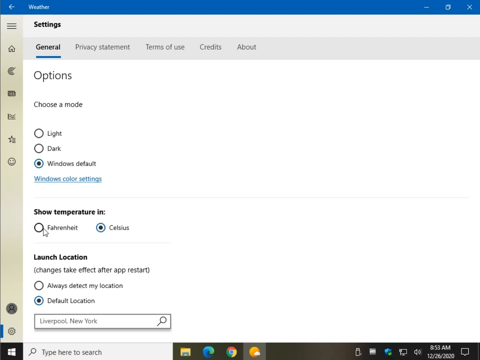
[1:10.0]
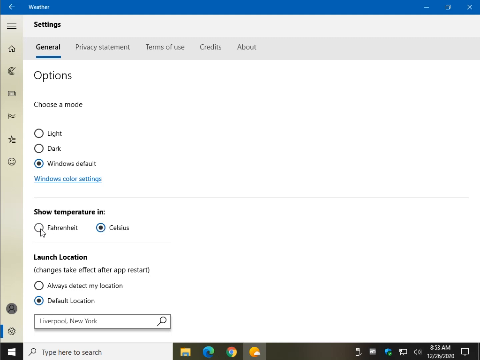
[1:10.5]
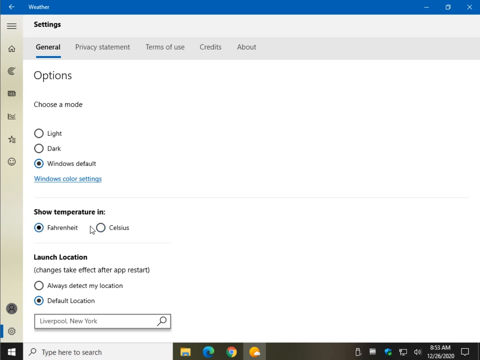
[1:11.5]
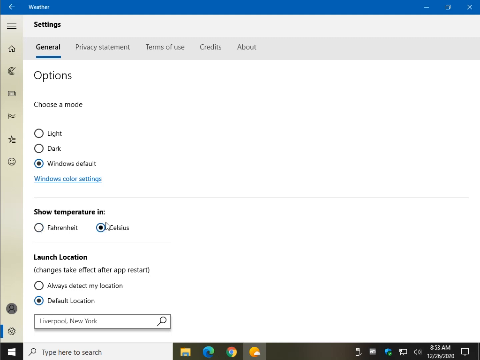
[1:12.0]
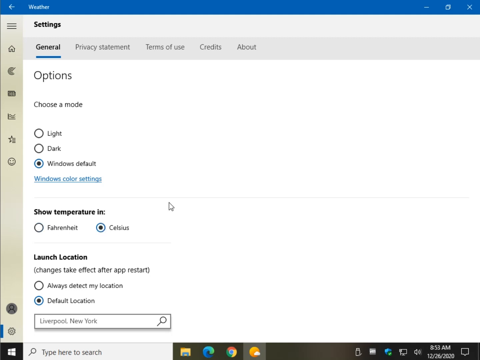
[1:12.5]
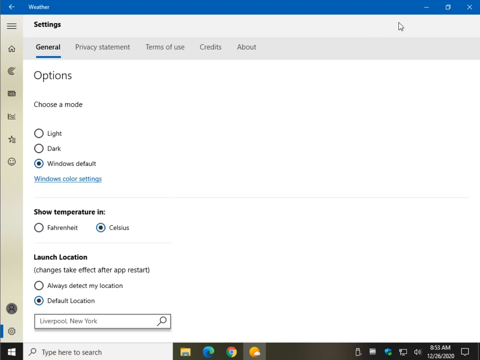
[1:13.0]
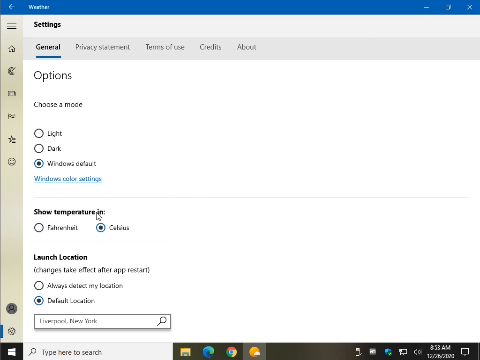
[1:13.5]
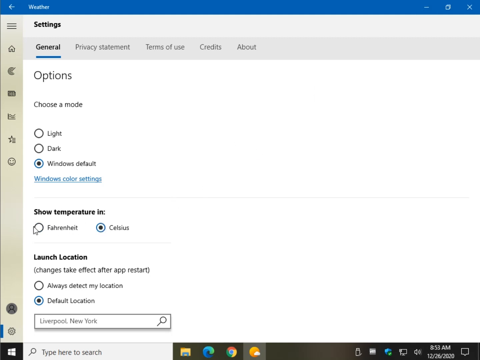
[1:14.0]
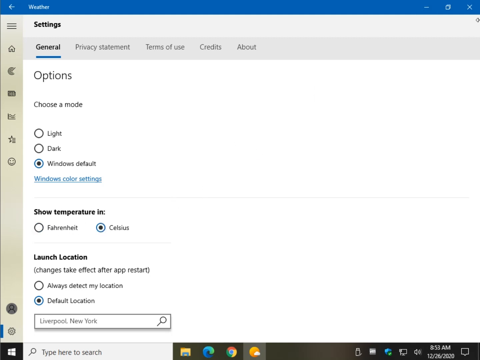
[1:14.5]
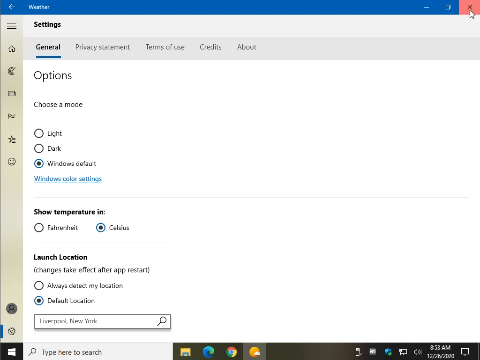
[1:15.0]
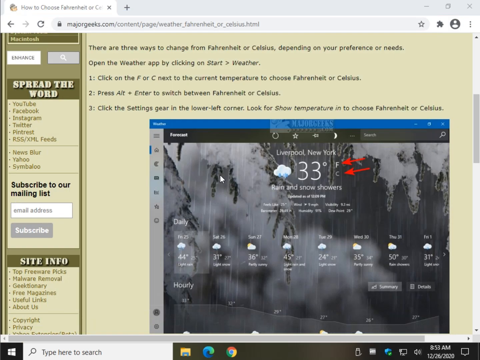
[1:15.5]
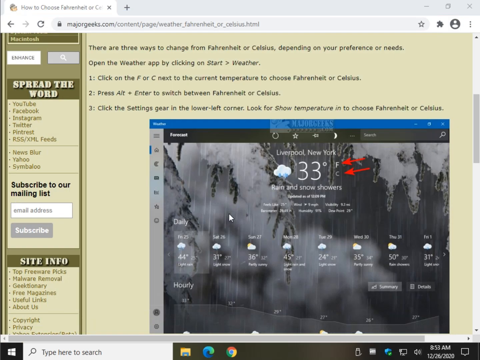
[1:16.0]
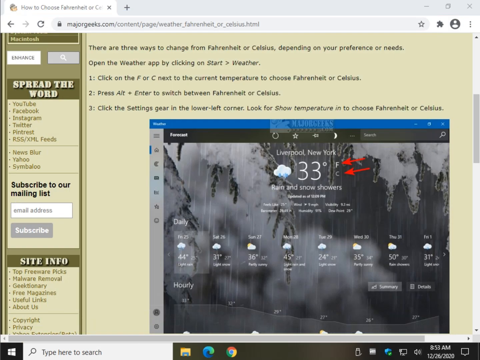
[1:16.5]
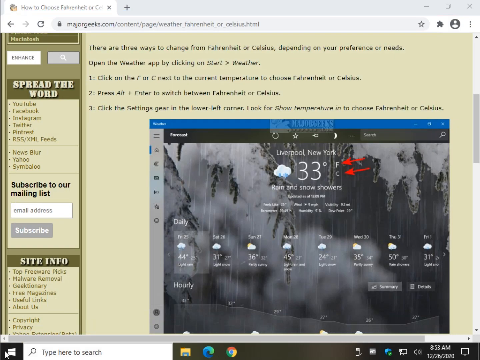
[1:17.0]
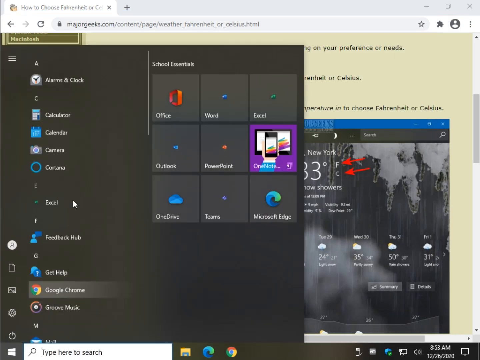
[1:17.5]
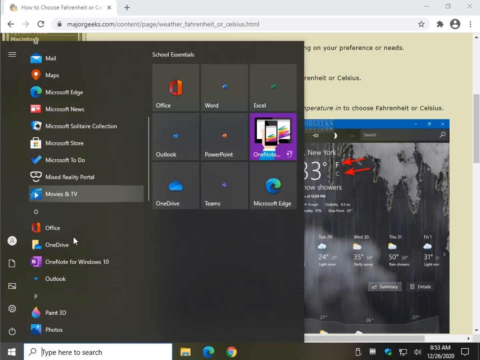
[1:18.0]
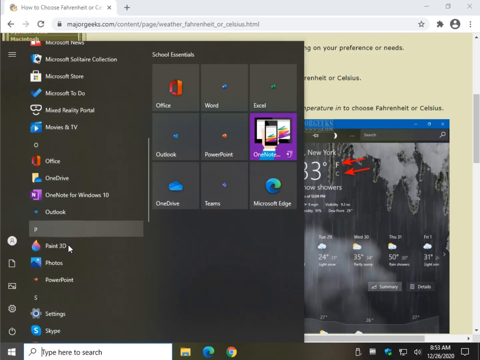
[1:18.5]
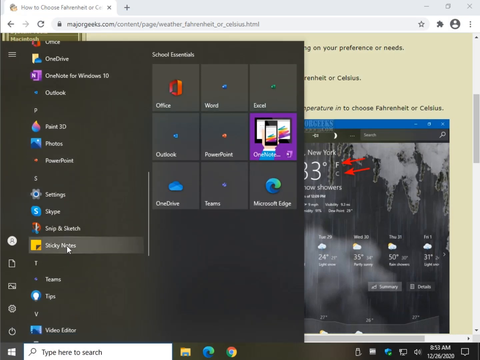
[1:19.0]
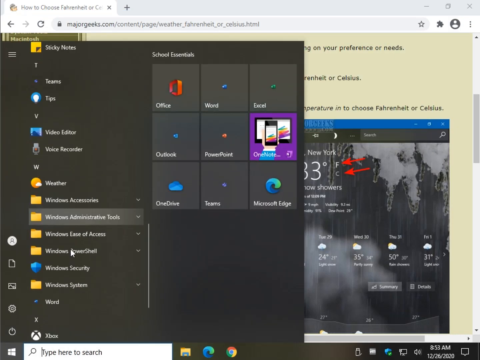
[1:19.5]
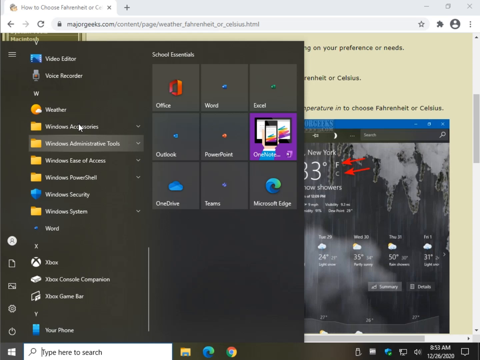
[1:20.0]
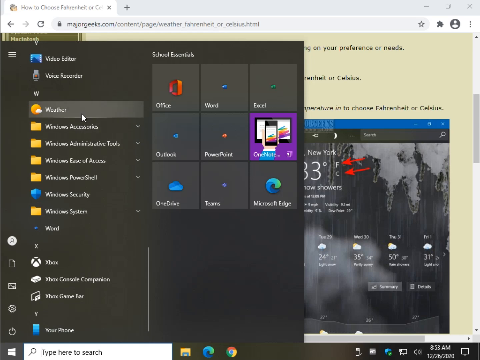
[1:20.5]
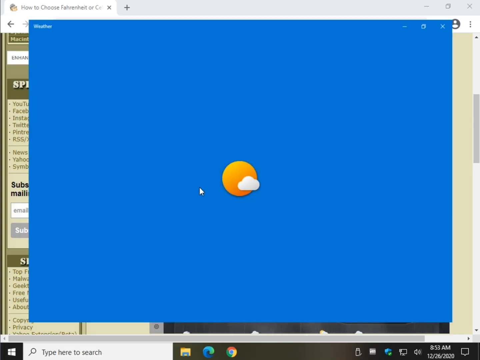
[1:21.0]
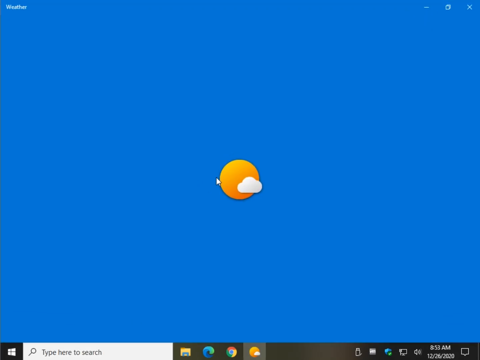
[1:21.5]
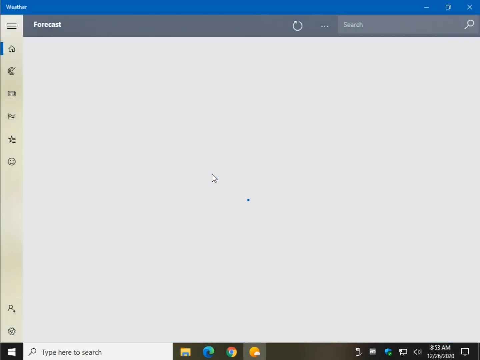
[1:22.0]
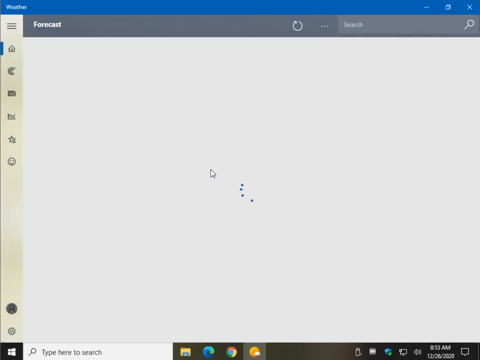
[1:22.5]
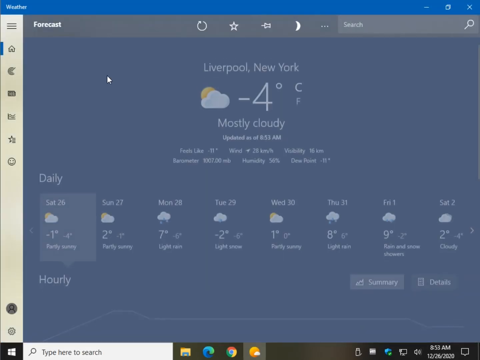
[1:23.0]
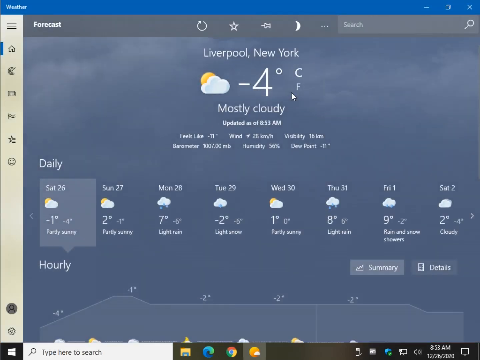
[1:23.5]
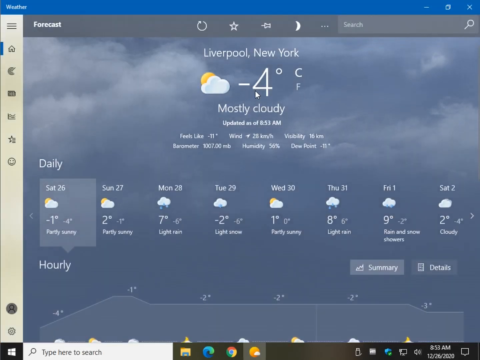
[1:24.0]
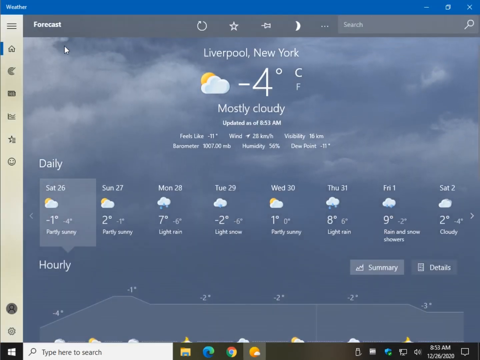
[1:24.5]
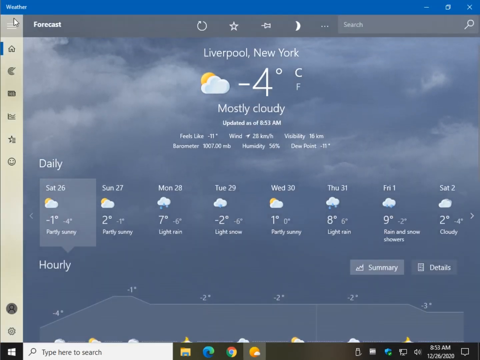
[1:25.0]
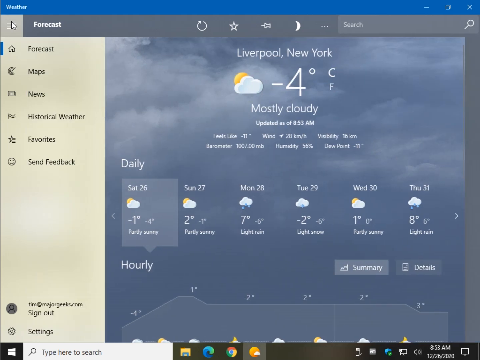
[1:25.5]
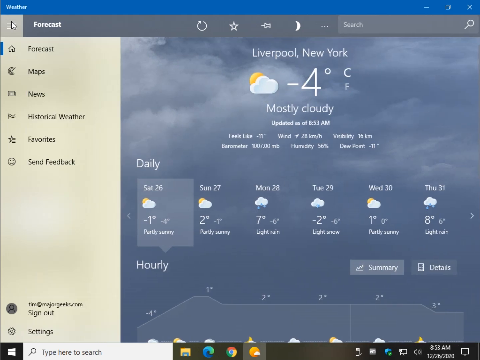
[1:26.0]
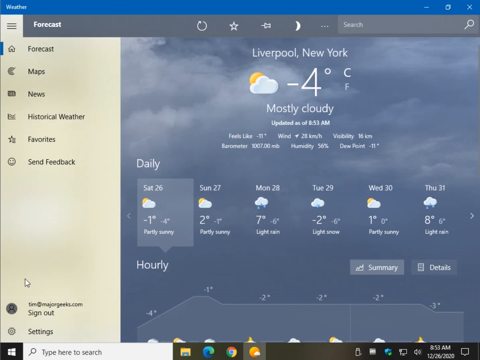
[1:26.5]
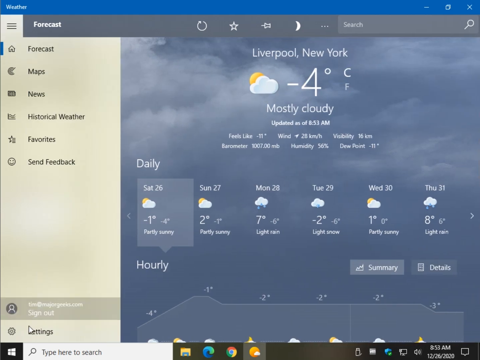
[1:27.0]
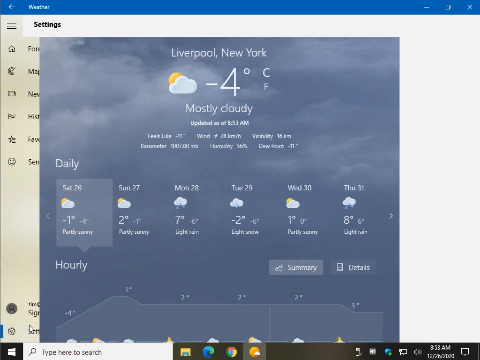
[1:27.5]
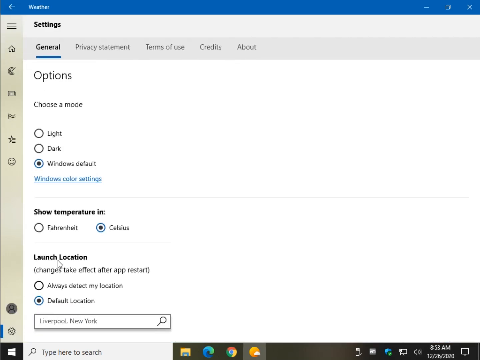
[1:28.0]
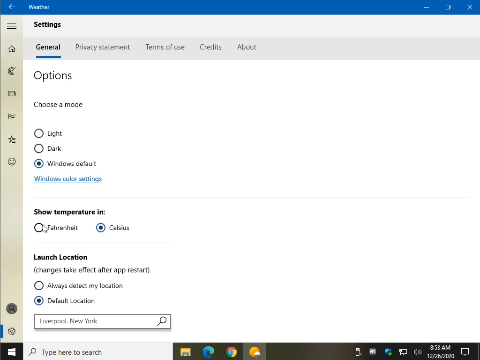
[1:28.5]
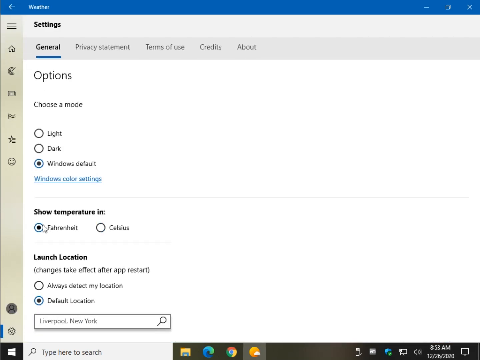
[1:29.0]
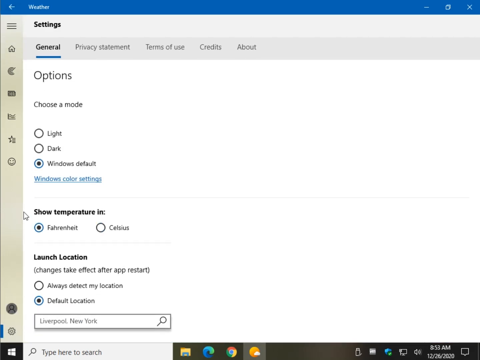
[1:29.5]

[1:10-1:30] The Settings page of the Weather app in Windows appears, open on the General tab under Options. It shows "Choose a mode" with Light, Dark and Window default, and under "Show temperatures in" it lists Fahrenheit and Celsius. At first the mouse is hovering over the Fahrenheit area; it moves to Fahrenheit and selects it, then moves to Celsius and selects it, then goes up and closes the page. The weather app is then reopened from the Start menu, returning to Liverpool, New York, which is now listed in Celsius instead of Fahrenheit at minus four degrees.